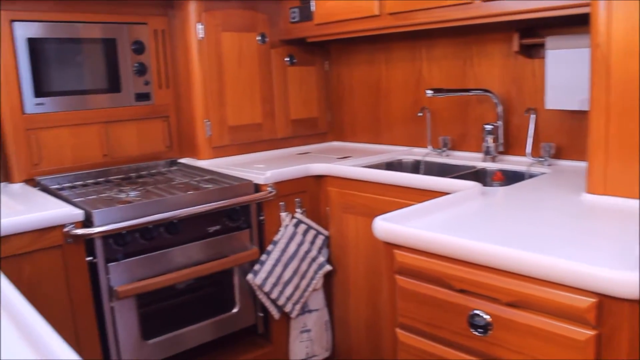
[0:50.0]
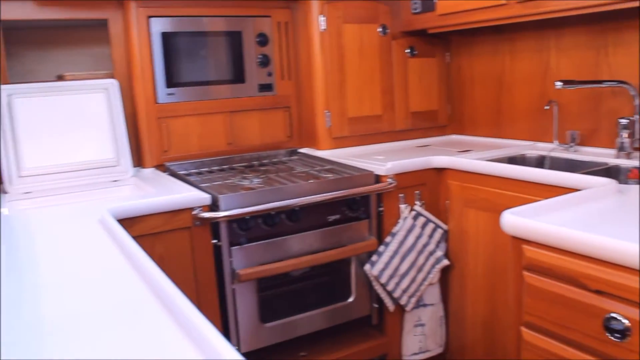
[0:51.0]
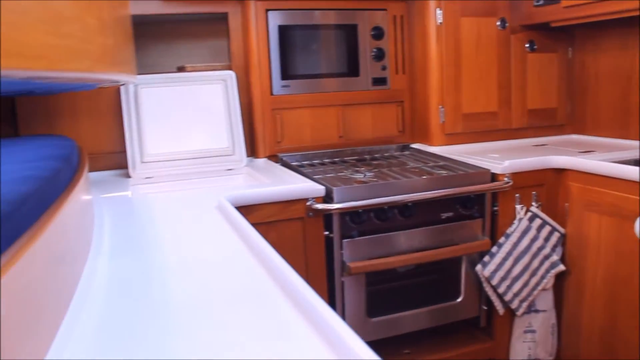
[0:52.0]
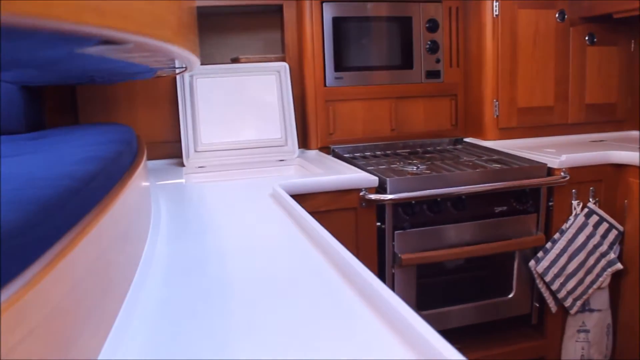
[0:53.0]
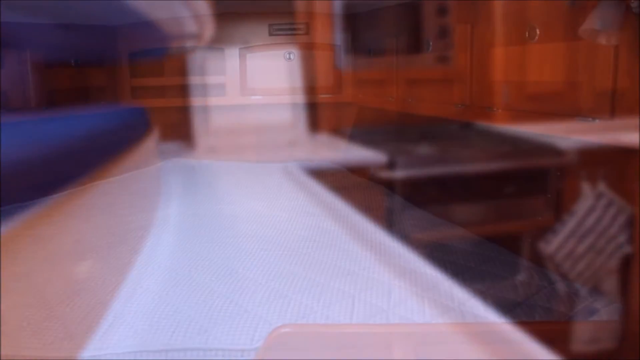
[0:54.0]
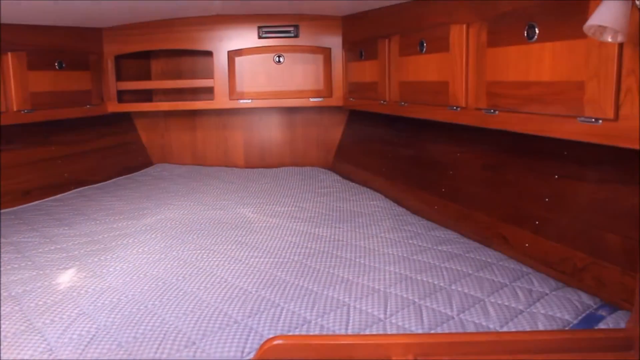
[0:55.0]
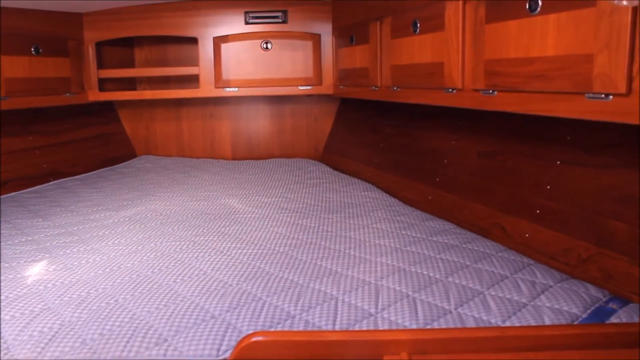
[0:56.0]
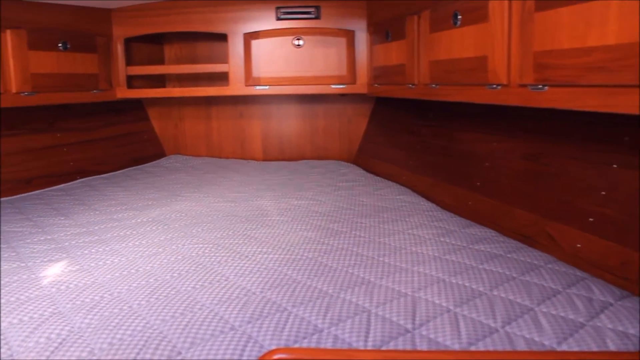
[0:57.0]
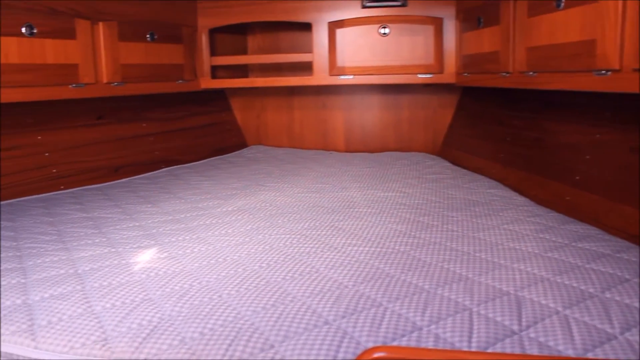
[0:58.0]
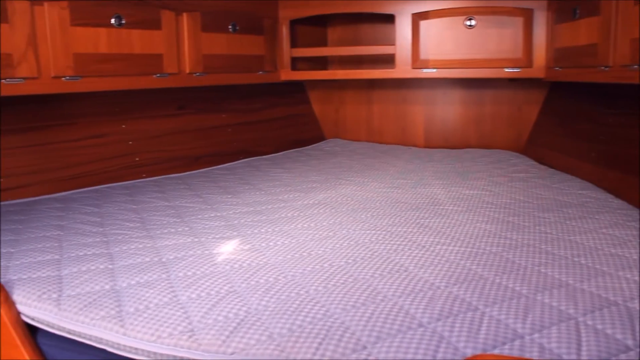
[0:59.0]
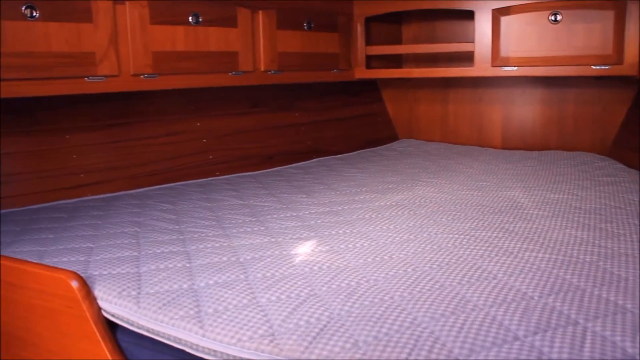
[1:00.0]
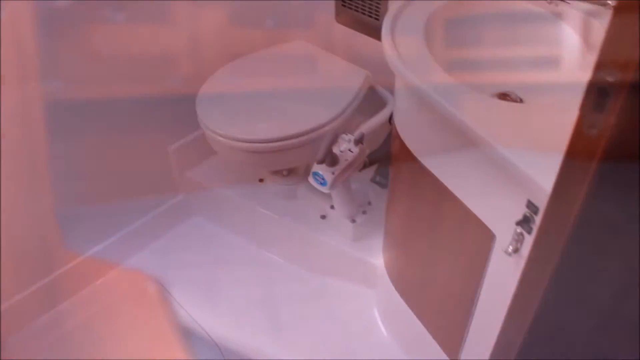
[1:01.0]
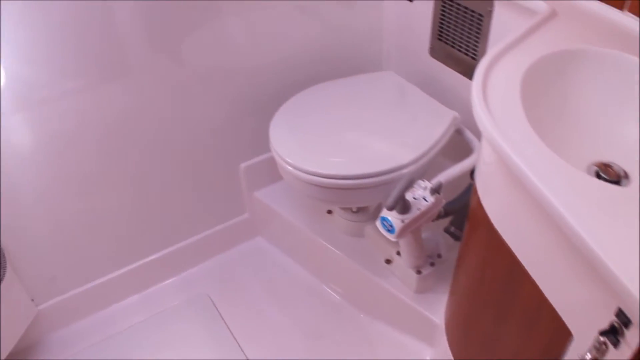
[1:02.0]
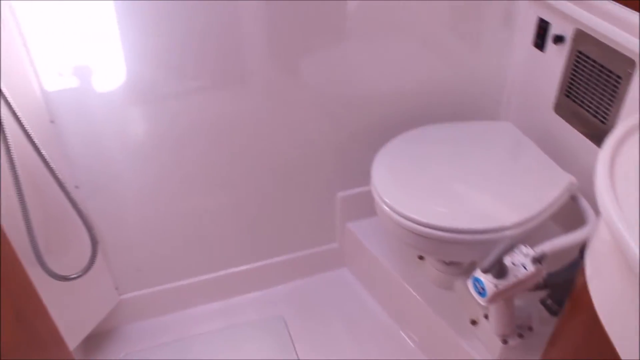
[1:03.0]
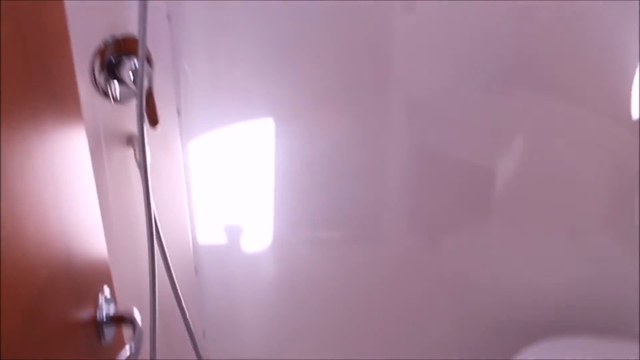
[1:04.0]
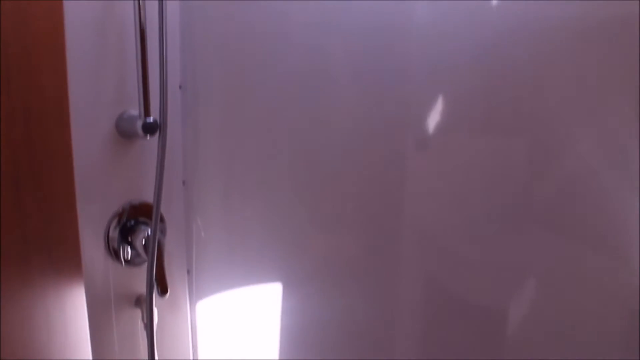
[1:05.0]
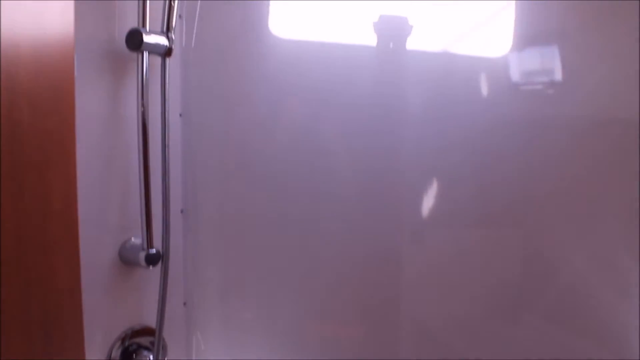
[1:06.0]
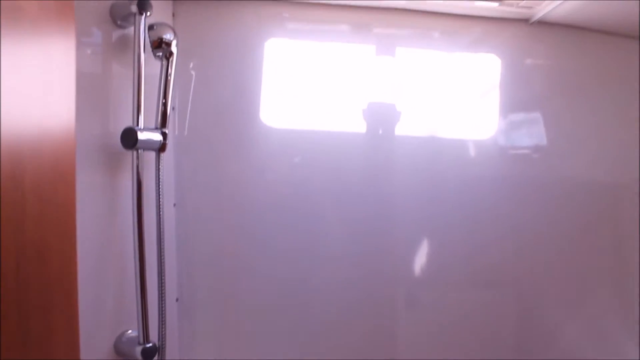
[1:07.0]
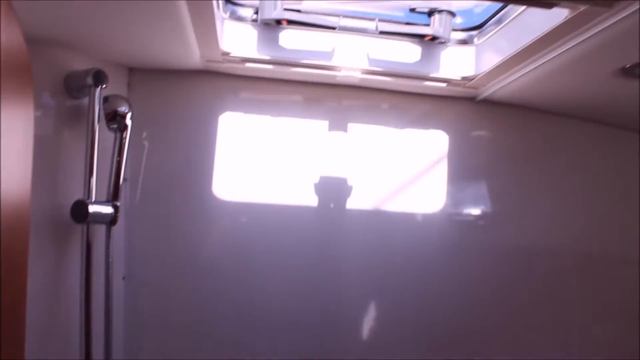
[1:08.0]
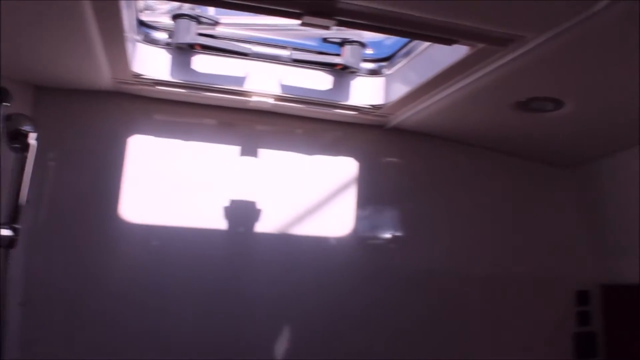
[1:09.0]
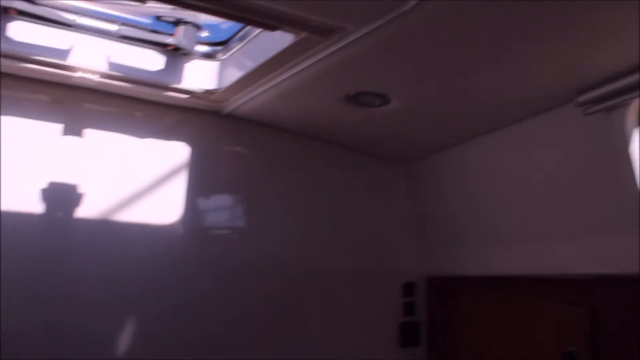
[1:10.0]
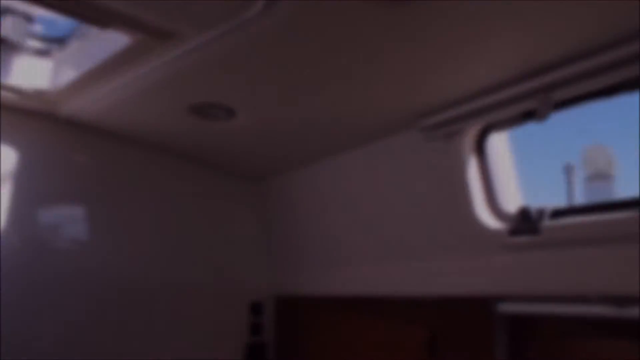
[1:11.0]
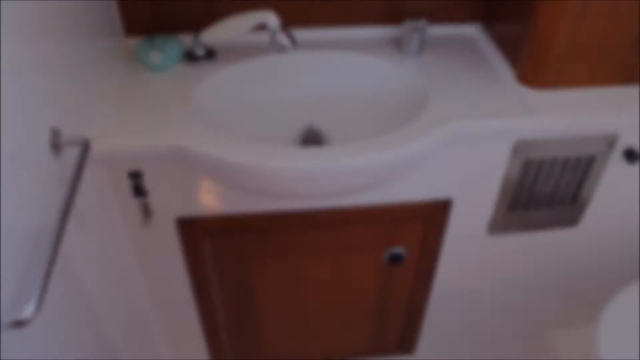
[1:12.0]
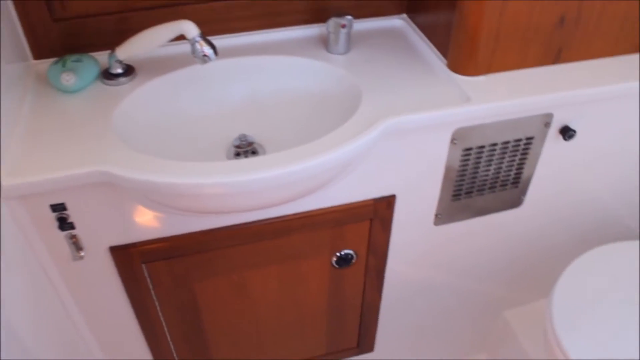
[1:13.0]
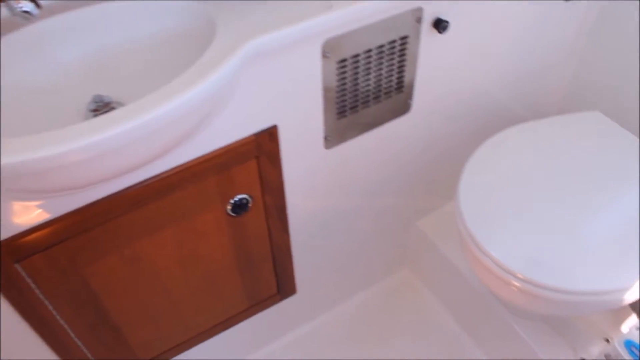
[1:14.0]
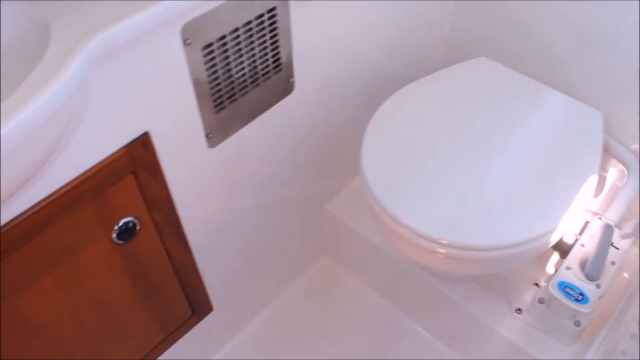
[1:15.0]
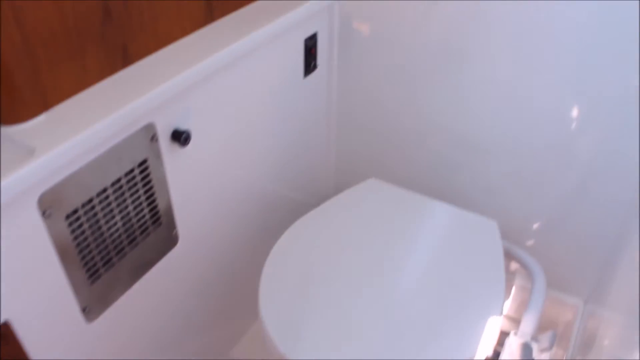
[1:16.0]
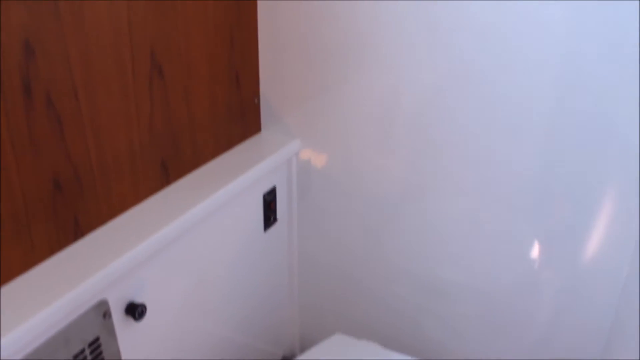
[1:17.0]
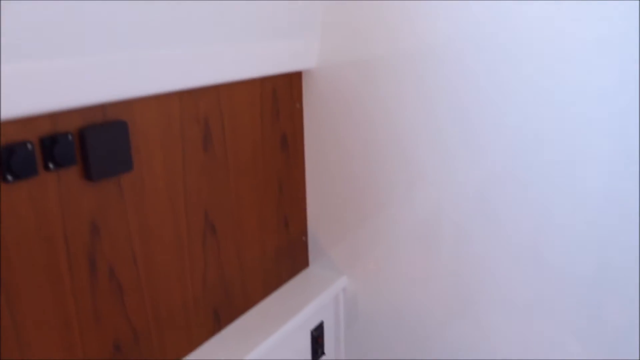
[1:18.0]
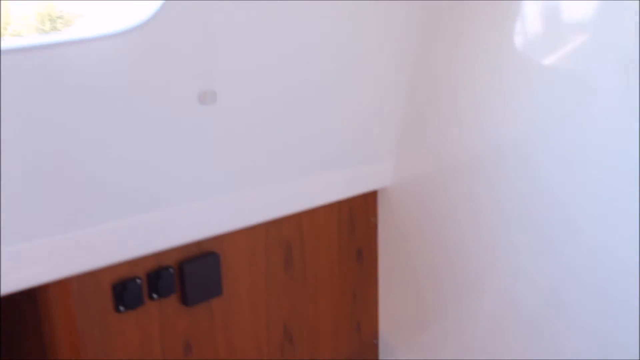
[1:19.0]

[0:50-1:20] The small kitchen continues to be shown, with the kitchen sink on the right side and white countertops. To the left is a silver oven, which appears to have a stove on top, though it is hard to tell. Above the oven is a silver microwave built into the wall. There are doors and cabinets throughout the kitchen. Like the rest of the boat's interior, the kitchen has a brown wood-like finish; the walls, doors and cabinets are all made of wood. The camera shifts to the left, and the scene changes to show what looks like a sleeping area with a white mattress; the bed is very large and looks like a king-size bed. The scene then switches to a small, compact bathroom with a toilet and what looks like the shower to the left side. The camera goes up to show a little window on the ceiling of the bathroom. The scene then changes to show the bathroom sink and the toilet with its lid closed. The view goes up to a window in the bathroom, looking to the outside.